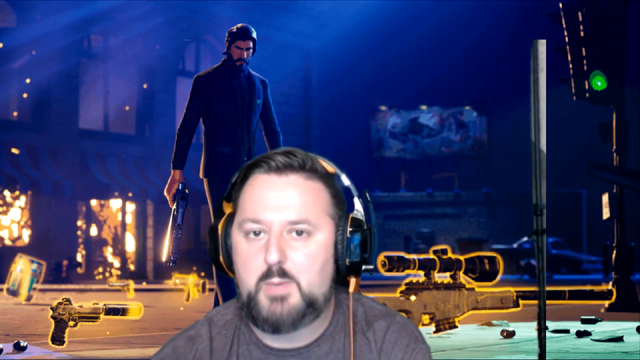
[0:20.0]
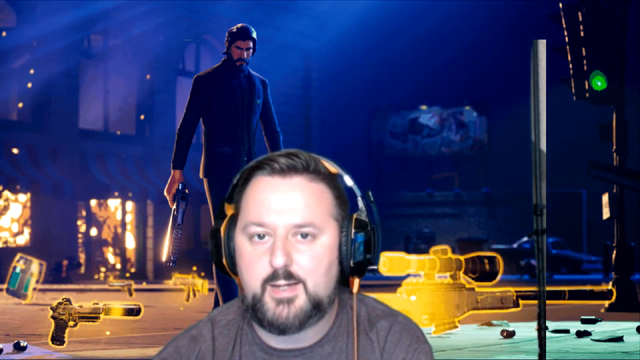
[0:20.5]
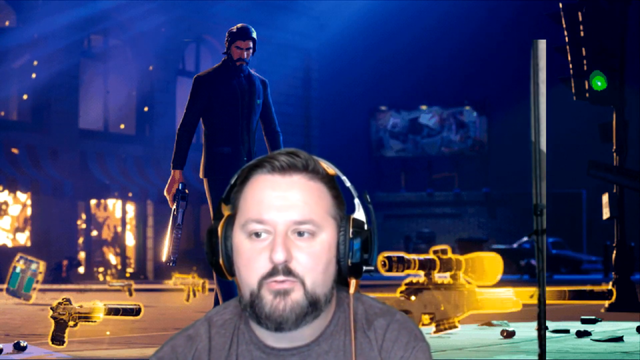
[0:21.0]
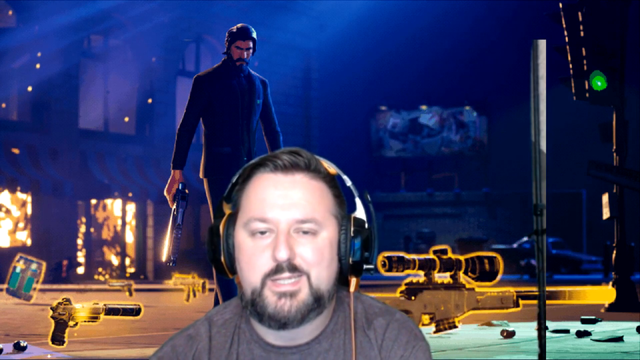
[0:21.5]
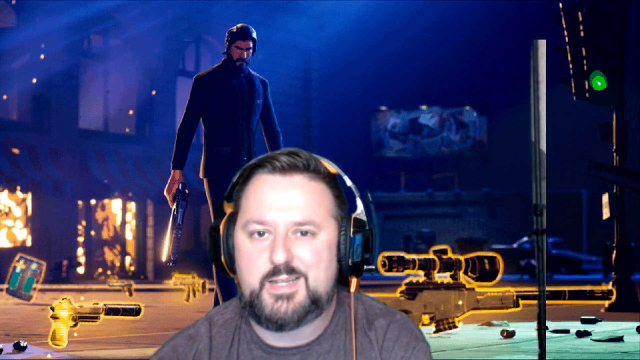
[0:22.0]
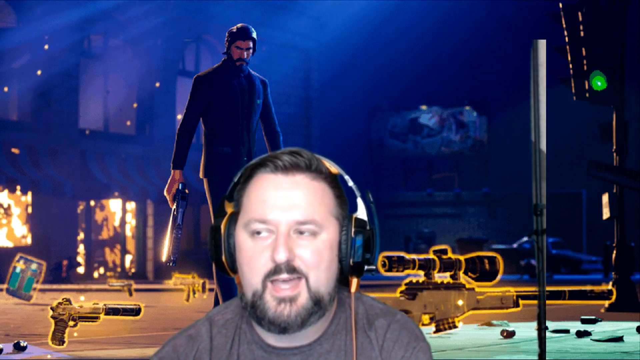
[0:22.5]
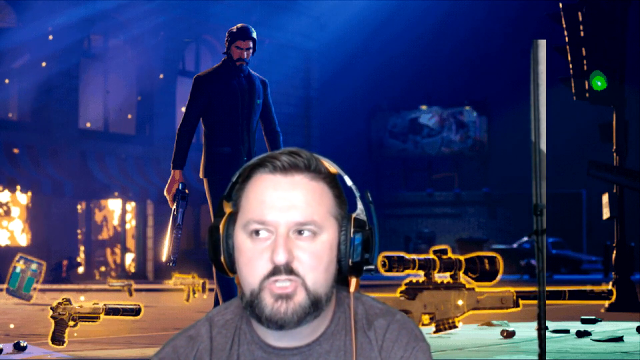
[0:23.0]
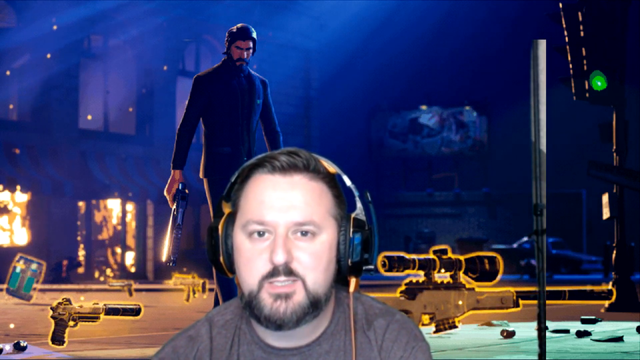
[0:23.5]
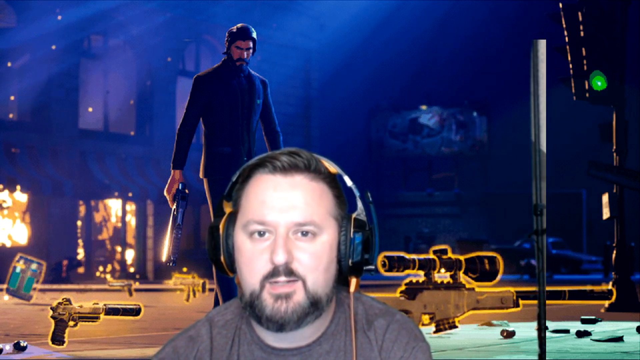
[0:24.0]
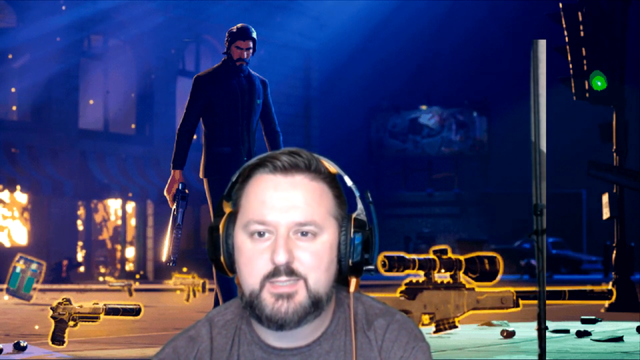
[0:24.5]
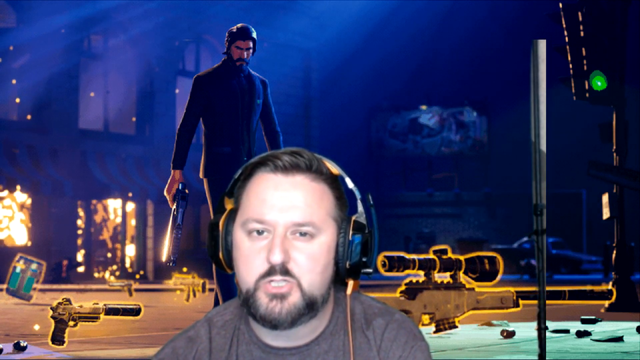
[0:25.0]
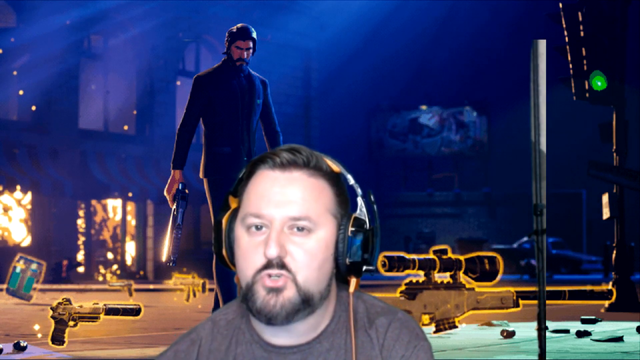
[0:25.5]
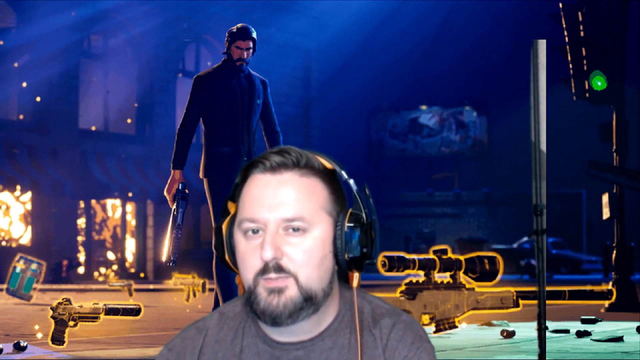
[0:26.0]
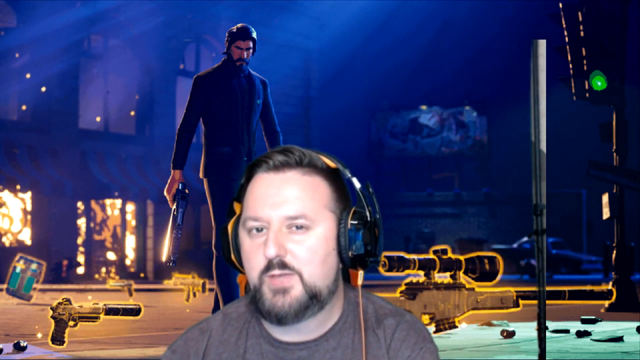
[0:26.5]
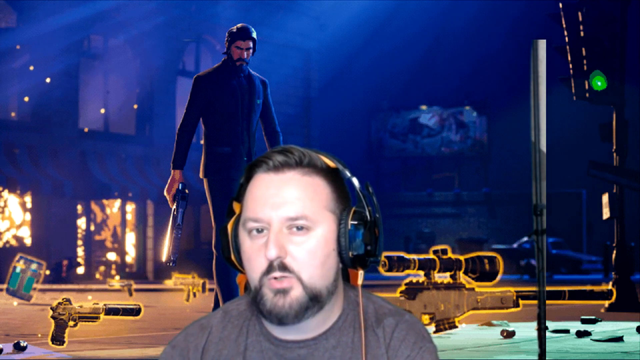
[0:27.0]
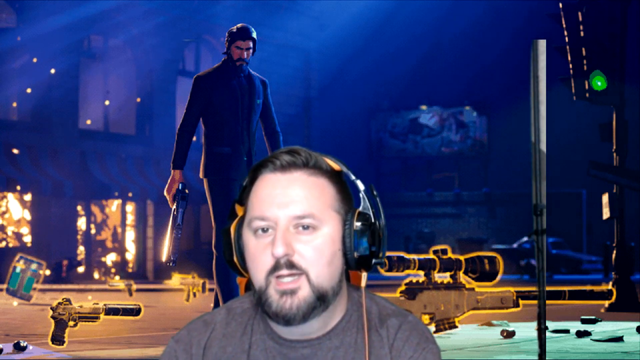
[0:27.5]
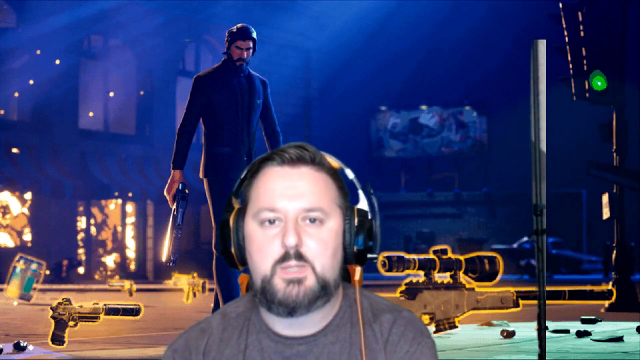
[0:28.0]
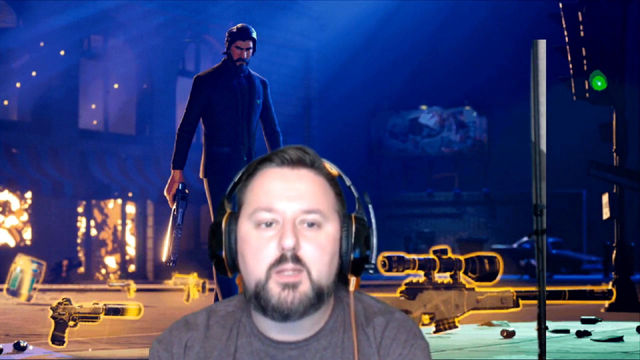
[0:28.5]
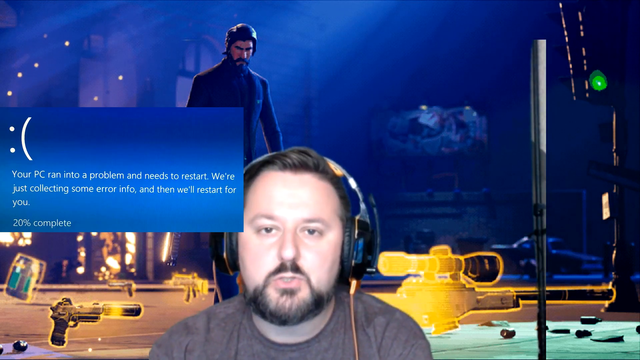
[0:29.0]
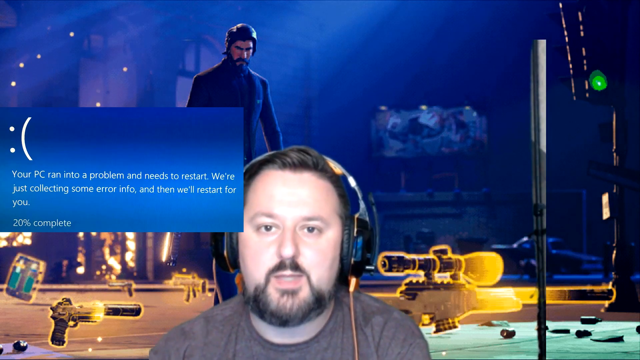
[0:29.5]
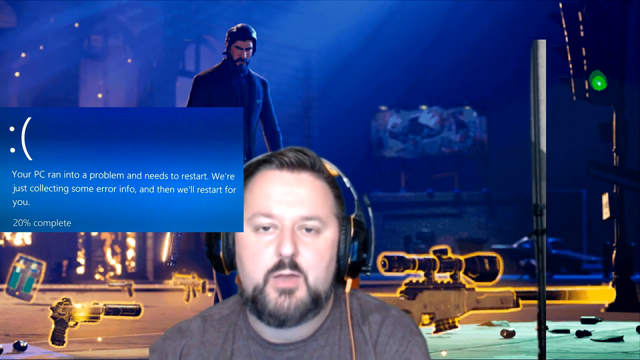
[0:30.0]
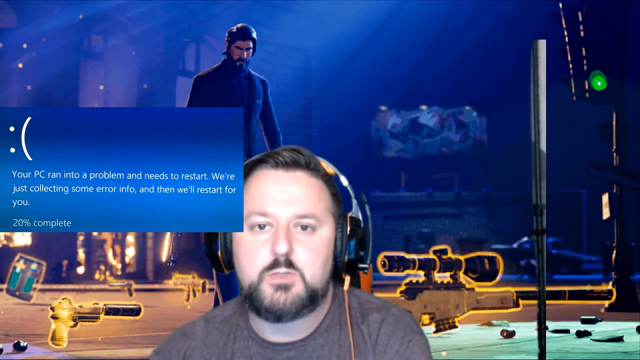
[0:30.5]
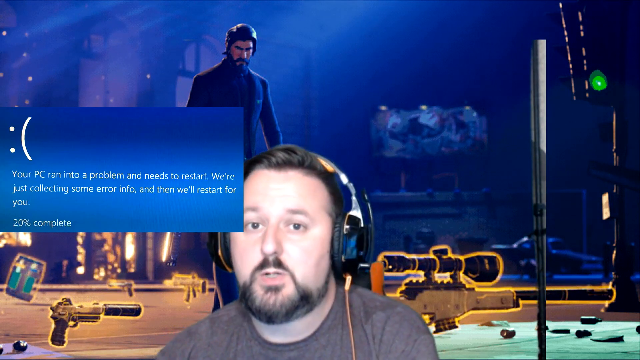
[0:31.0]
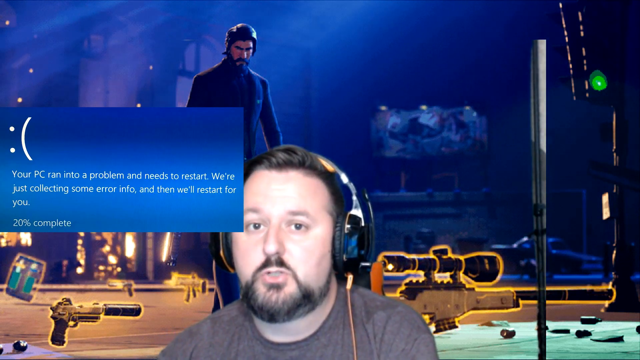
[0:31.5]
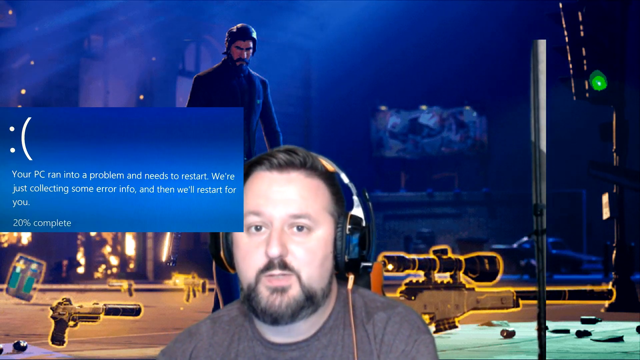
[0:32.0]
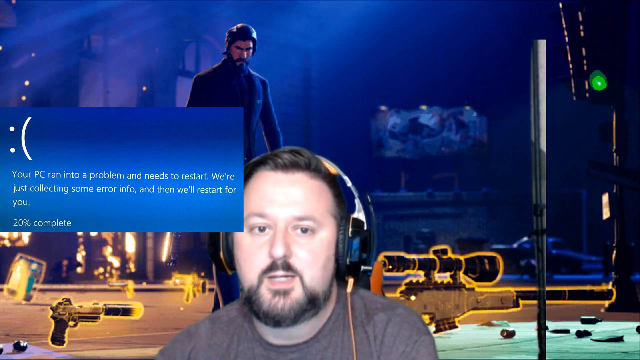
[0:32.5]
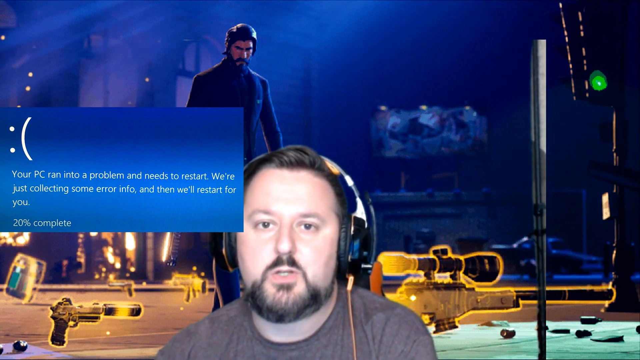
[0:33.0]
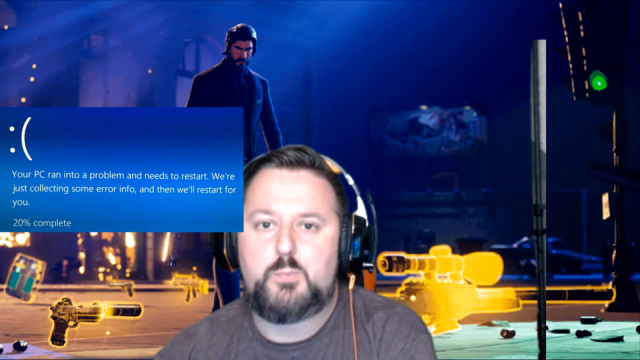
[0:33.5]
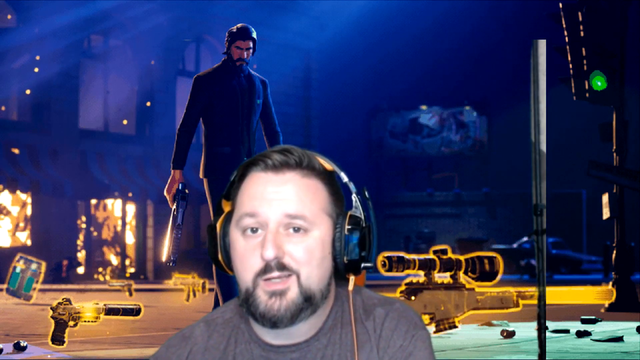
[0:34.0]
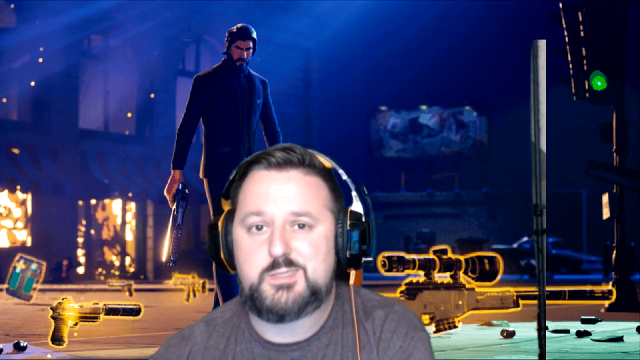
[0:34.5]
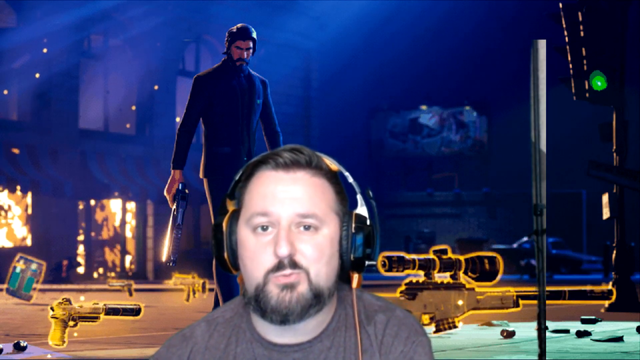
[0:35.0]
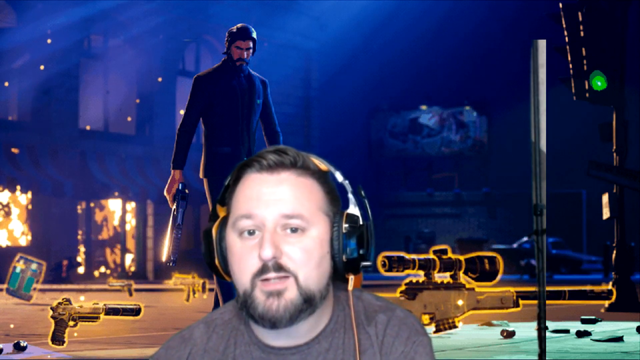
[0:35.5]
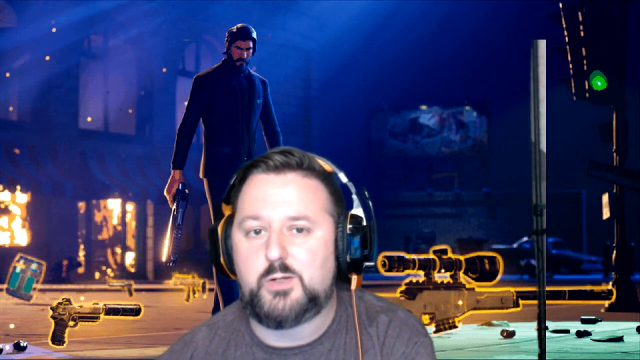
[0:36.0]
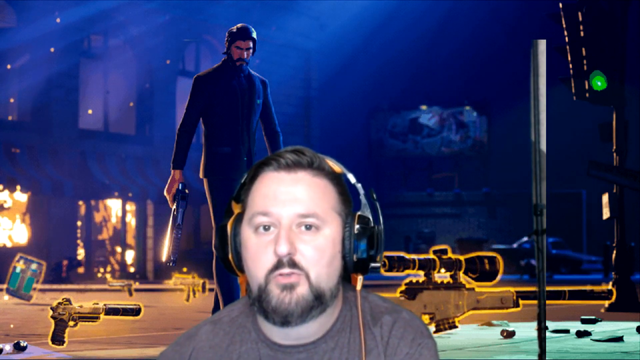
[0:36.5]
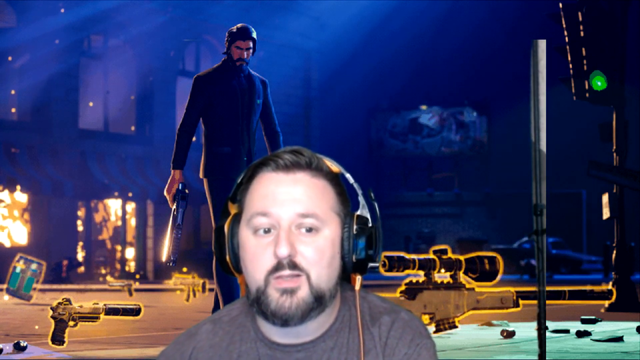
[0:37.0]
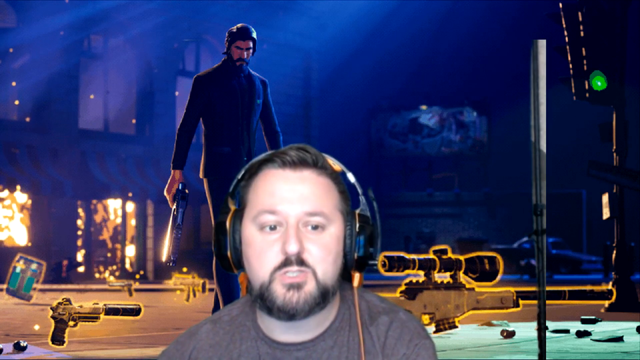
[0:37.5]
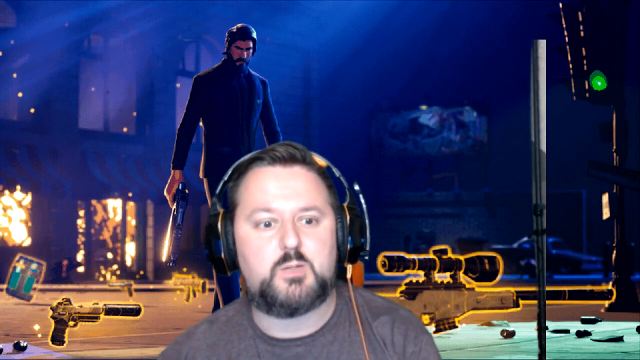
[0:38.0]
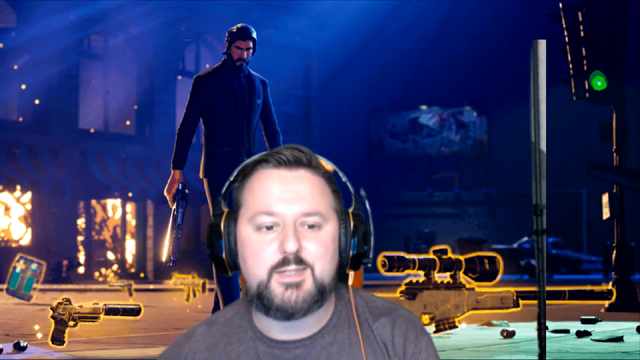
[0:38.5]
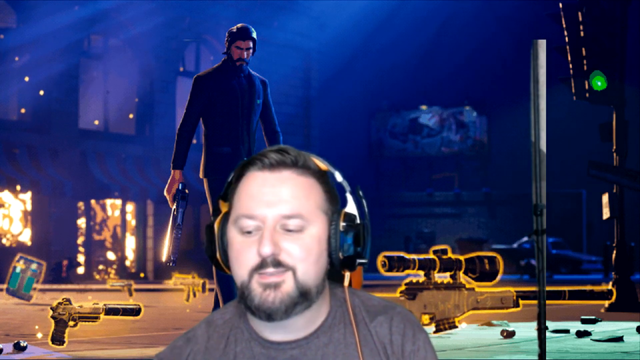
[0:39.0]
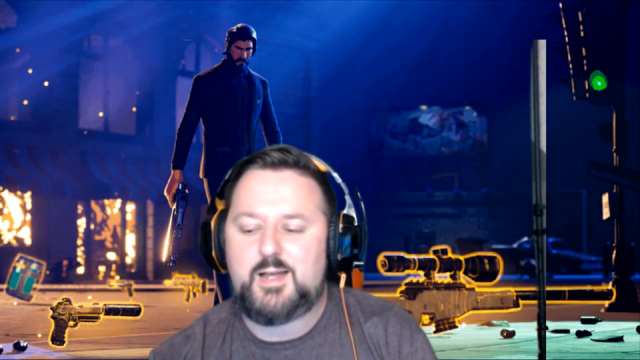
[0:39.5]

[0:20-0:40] The man continues talking to the camera, sometimes looking to the left side of the screen and looking down and around, possibly at different screens or at incoming comments. A pop-up window says that your PC ran into a problem and needs to restart, with a 20% complete bar in the little pop-up window. The man appears to be streaming his game, perhaps live, or making a video about this shooter or action video game. The background stays the same: the John Wick character in the dark black suit looks down towards the ground, and the background also appears to be a street with a car on the right-hand side, though it is very dark and almost obscured by the lighting and what could be smoke or fog. The man is very lit up, perhaps by a light in front of him that illuminates his features. His headphones look black with some padding on the ears.